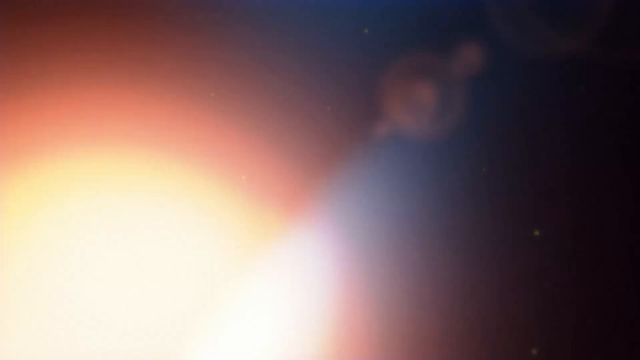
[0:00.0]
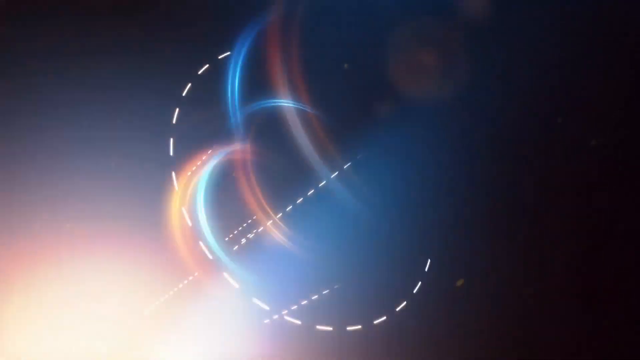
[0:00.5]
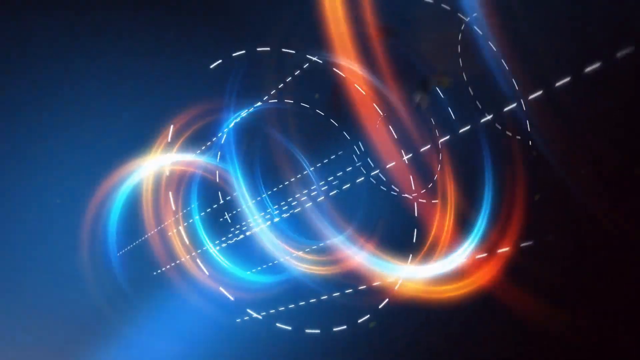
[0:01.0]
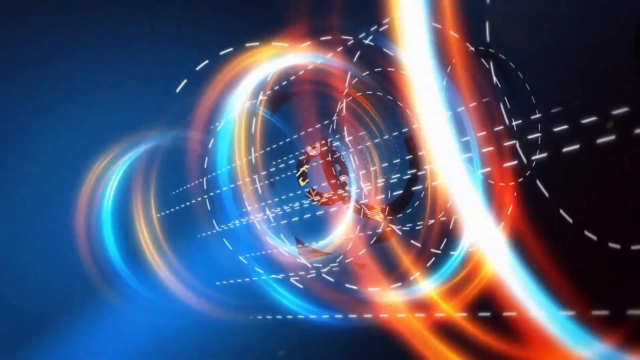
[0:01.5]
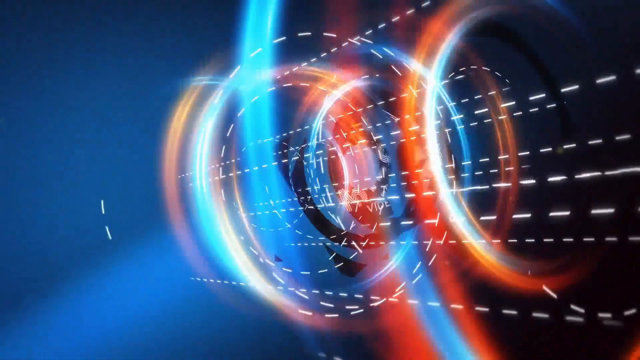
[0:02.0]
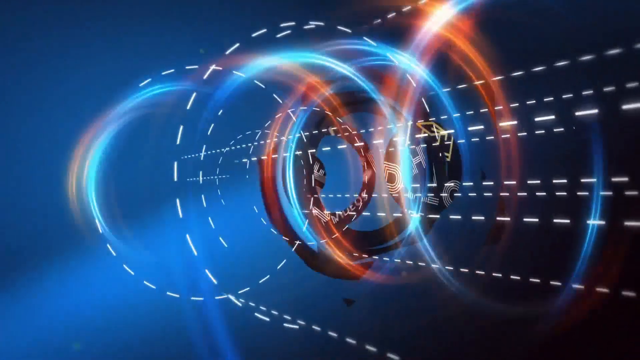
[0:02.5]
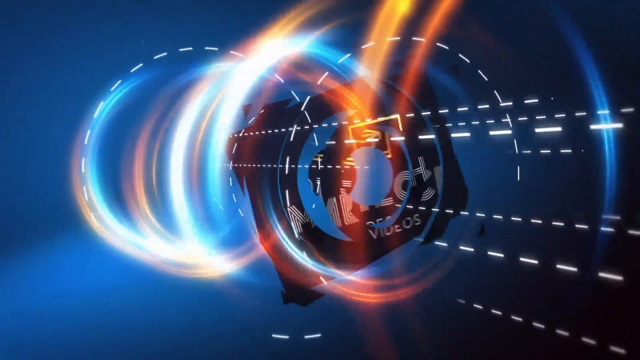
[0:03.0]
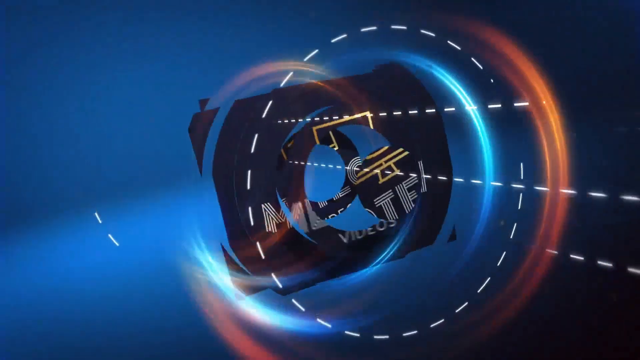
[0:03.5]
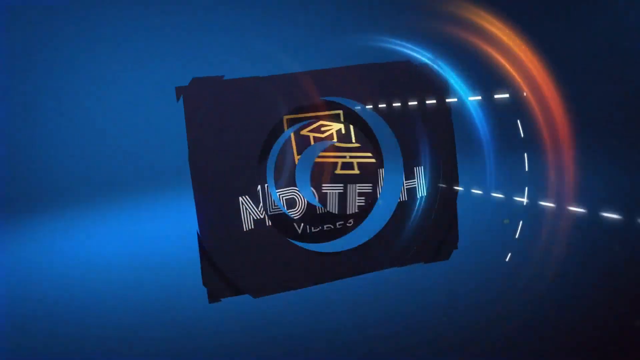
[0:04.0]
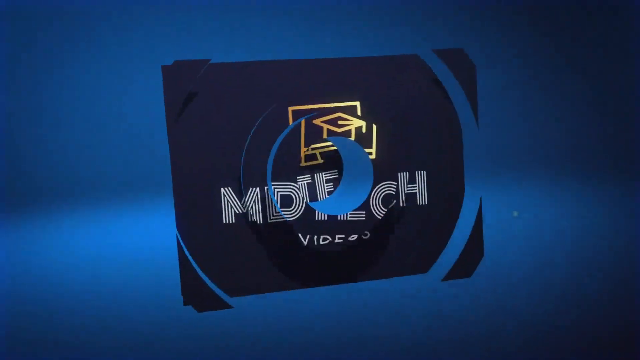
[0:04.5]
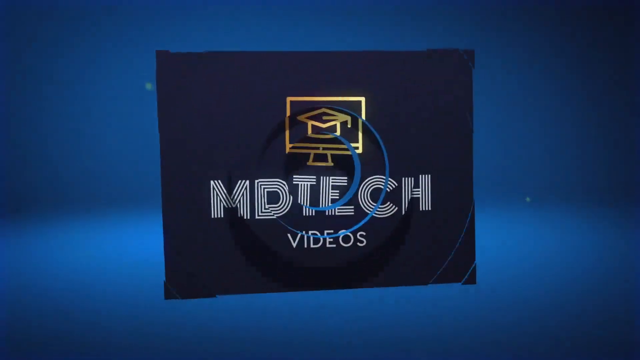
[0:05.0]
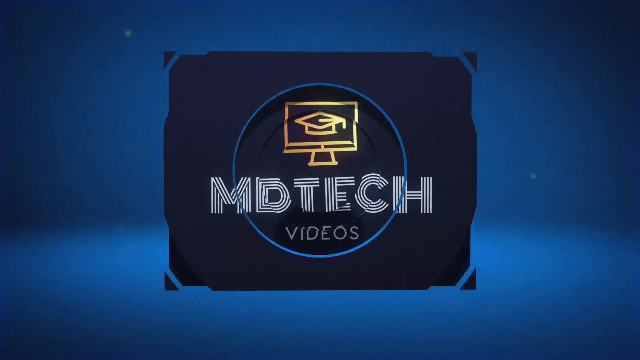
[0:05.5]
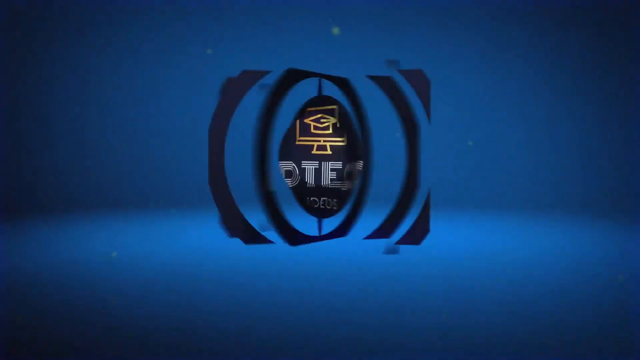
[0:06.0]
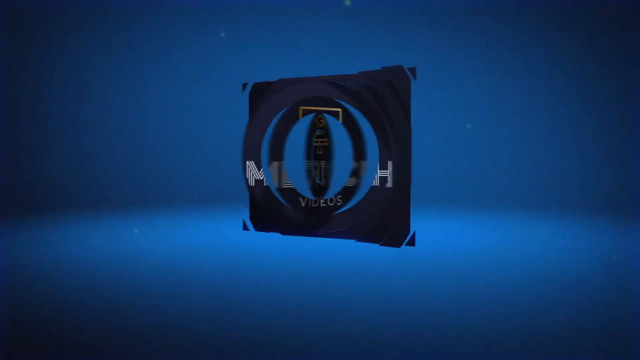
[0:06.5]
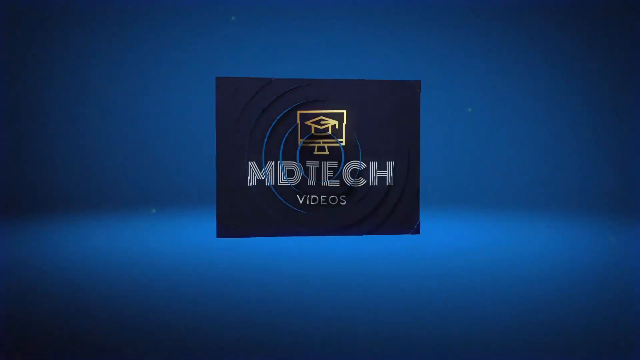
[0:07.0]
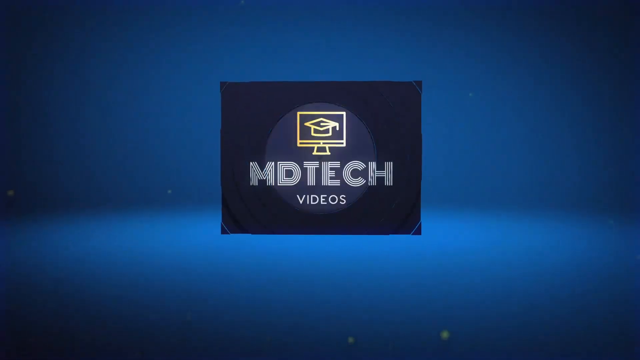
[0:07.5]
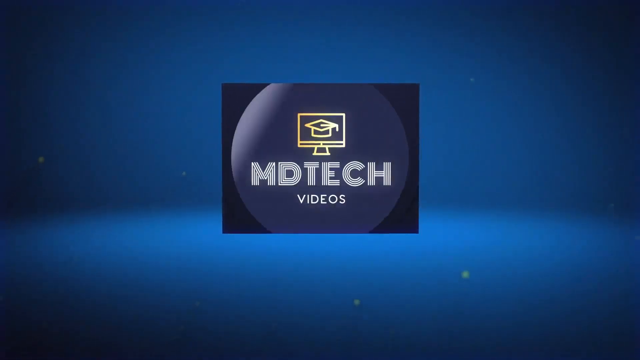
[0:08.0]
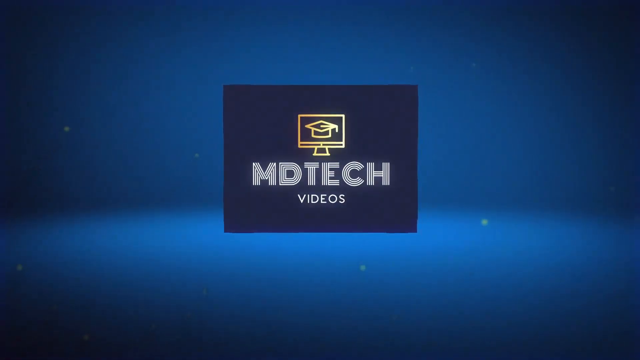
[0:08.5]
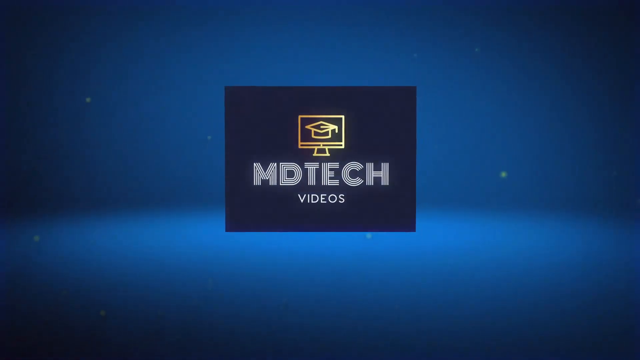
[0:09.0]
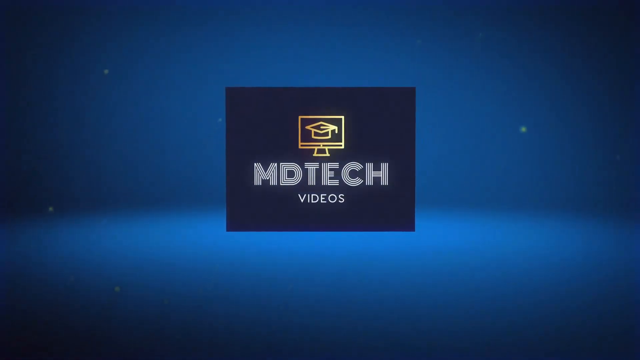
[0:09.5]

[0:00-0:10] The video opens on what looks like space. A spiral of light appears, followed by a logo that says "MD Tech Videos," which features a computer monitor with what appears to be a graduation cap. The logo moves and shines. The image then returns to the space-looking colors, which look like the sun. The graphics, effects and colors give a 2000s feel, and the background is blue with a vignette.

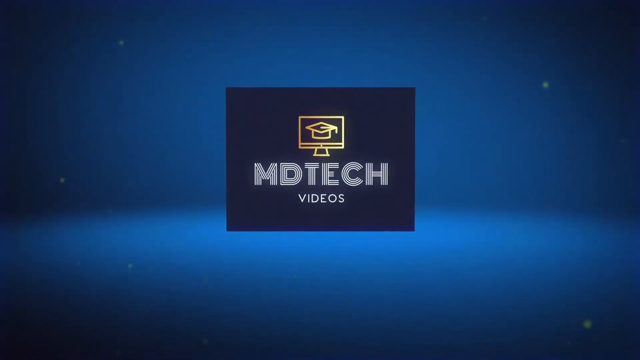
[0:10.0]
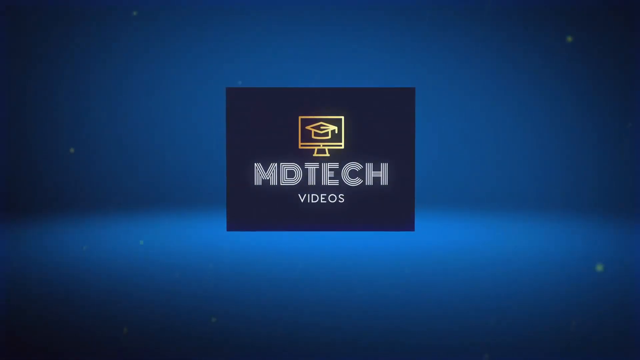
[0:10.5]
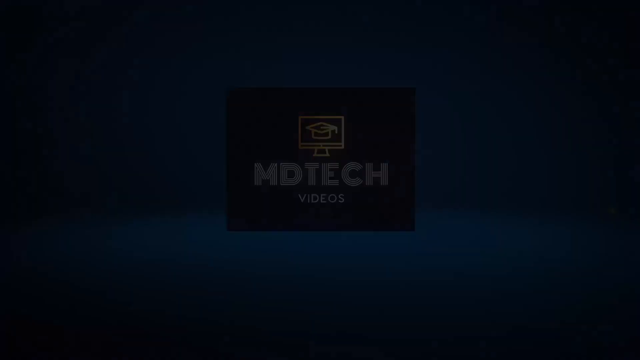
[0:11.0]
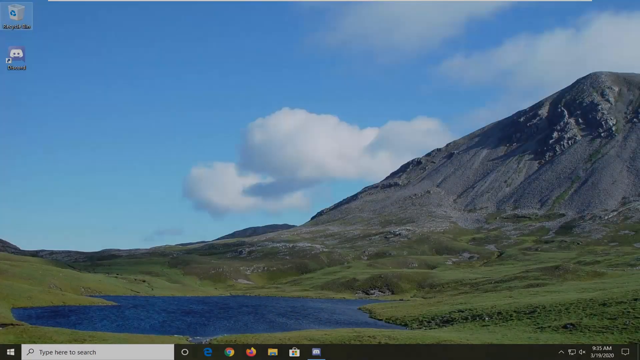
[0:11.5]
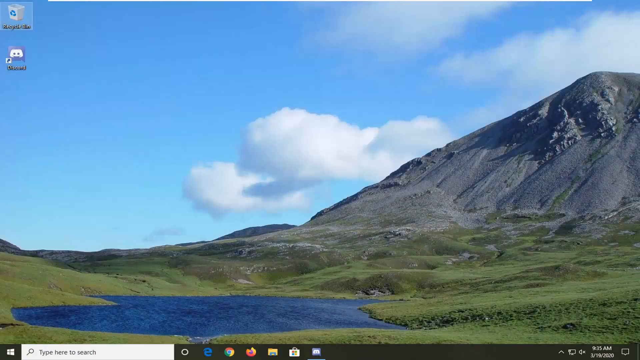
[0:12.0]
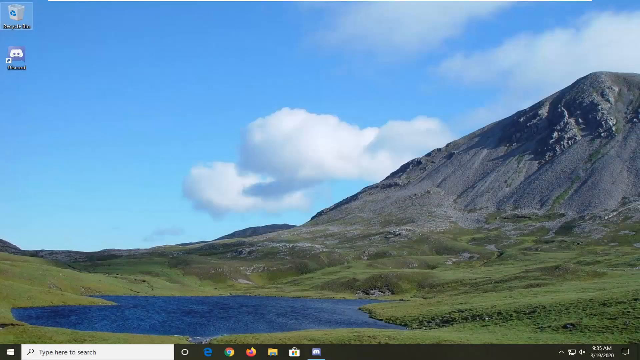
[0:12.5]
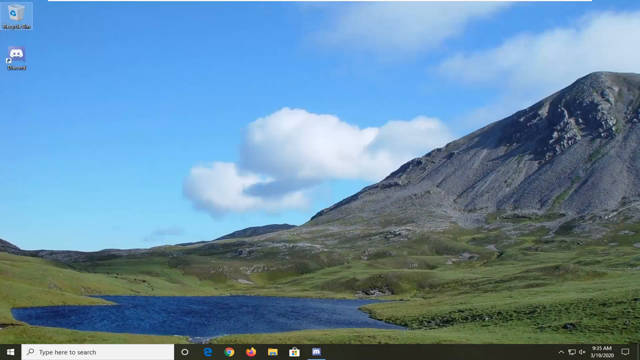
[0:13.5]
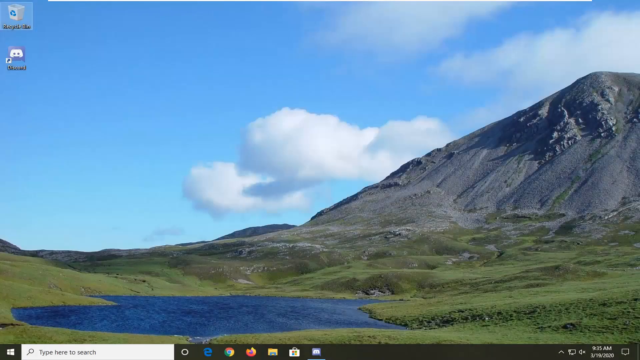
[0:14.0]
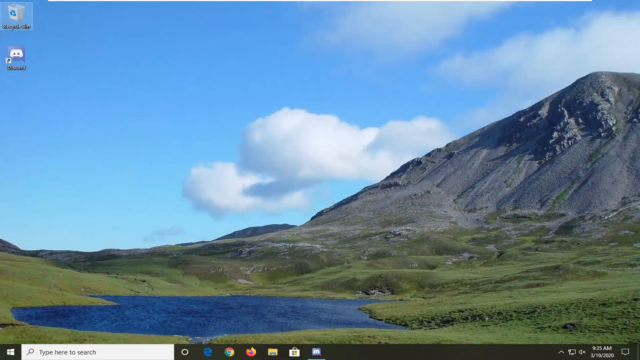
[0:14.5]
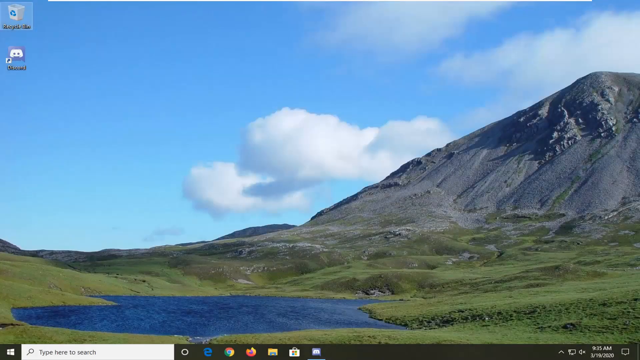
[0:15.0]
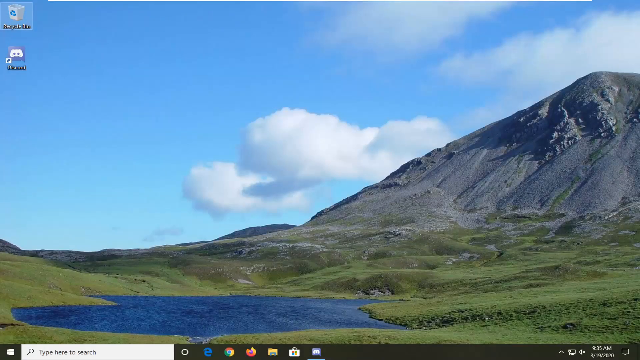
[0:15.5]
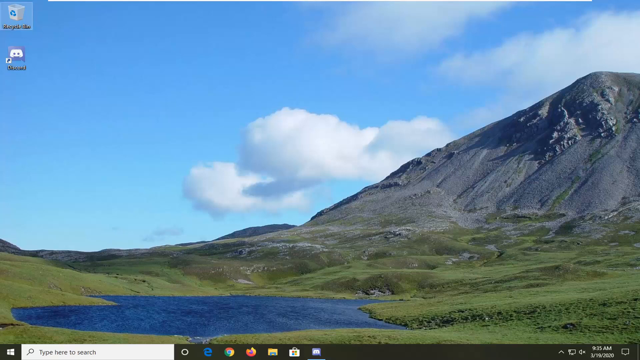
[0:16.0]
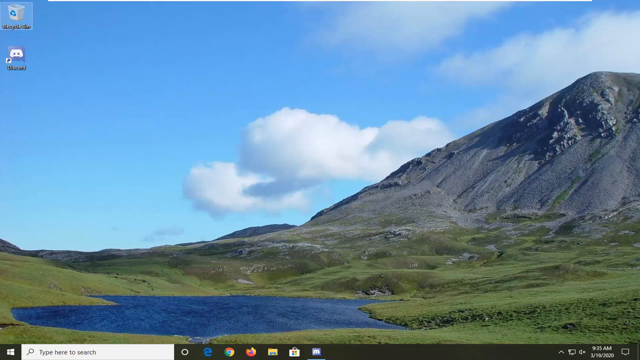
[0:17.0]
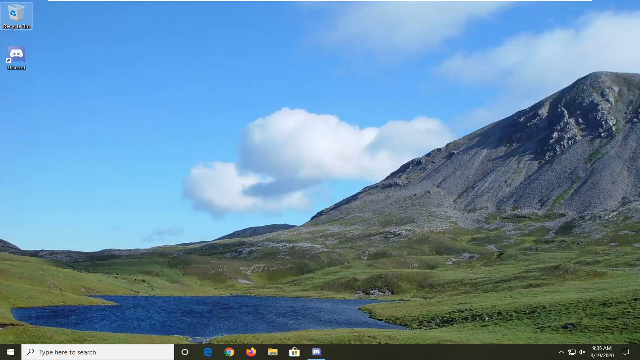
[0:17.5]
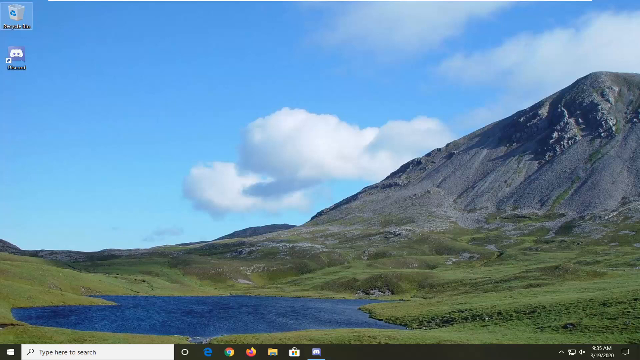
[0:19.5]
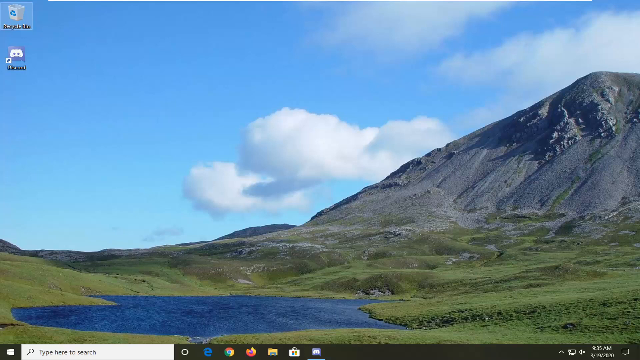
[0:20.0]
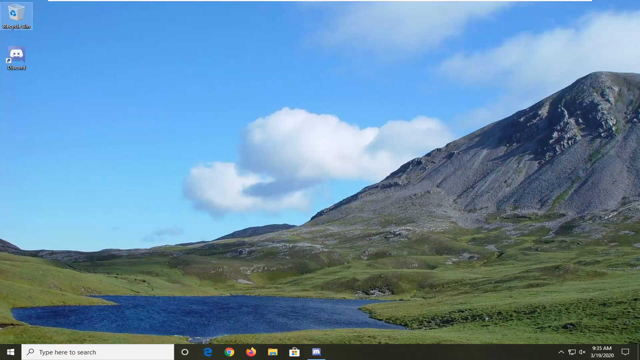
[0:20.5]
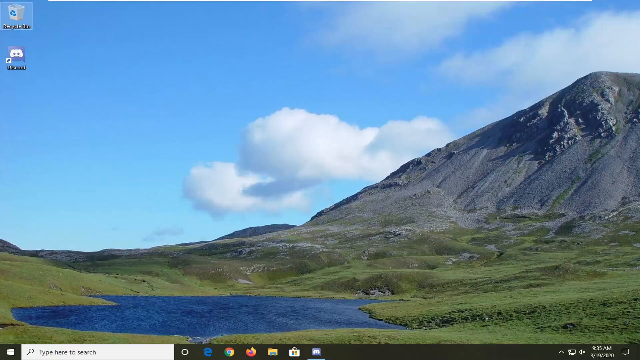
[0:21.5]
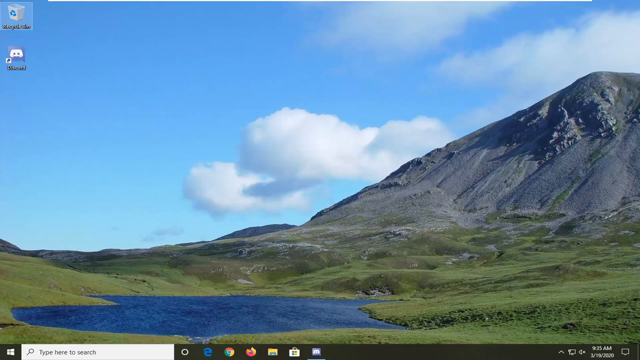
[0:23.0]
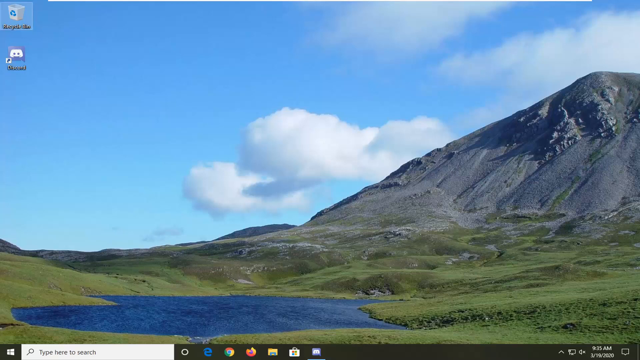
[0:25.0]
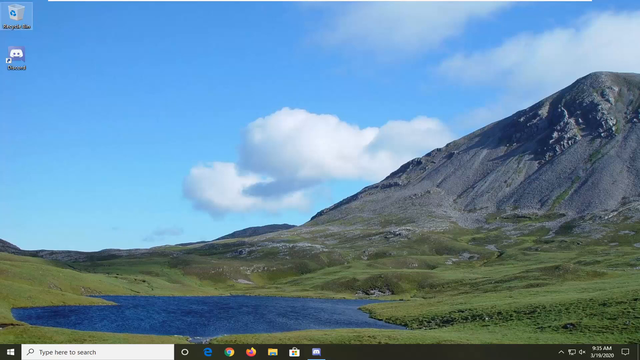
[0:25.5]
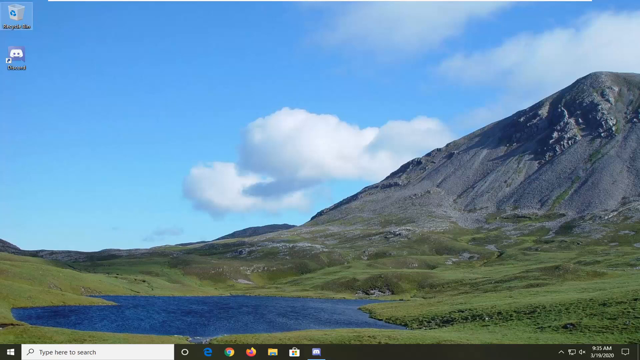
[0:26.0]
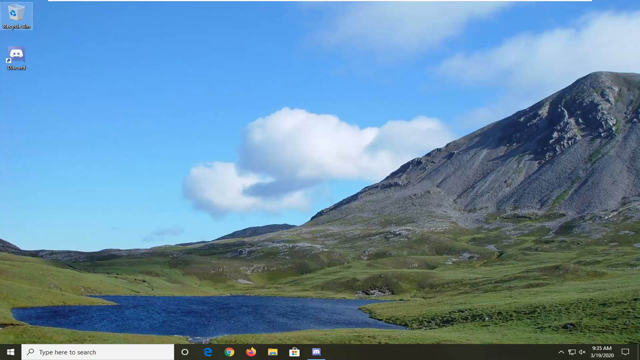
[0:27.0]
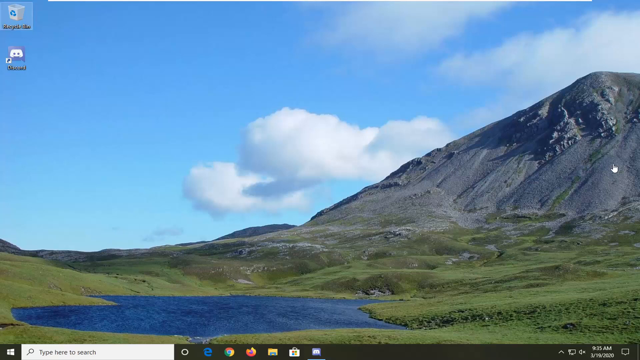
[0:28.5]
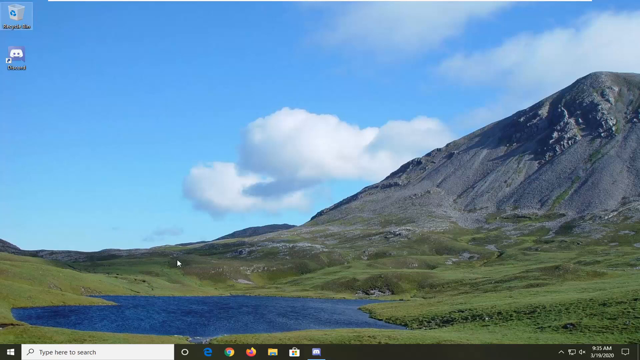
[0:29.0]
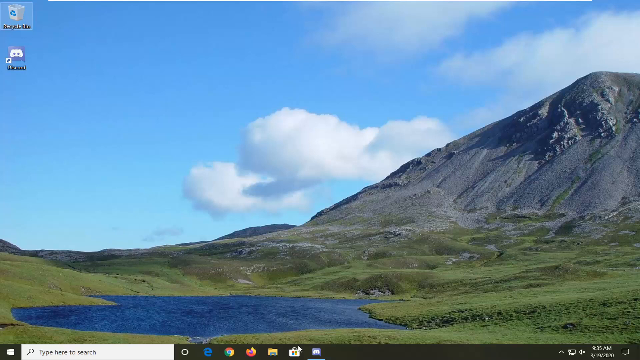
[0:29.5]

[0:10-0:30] A blue background with what looks like a few stars has a dark blue box in the middle that says "AMD Tech Videos." Above the letters is an outline of a computer monitor with a graduation cap inside. The scene then changes to a PC desktop background showing a very tall mountain, with four clouds in the back. At the bottom, small hills or valleys surround the mountain, with what looks like a river or a lake in the middle. At the top left of the screen are the trash bin and what looks like the Discord logo. For a while nothing moves; then the mouse moves back and forth.